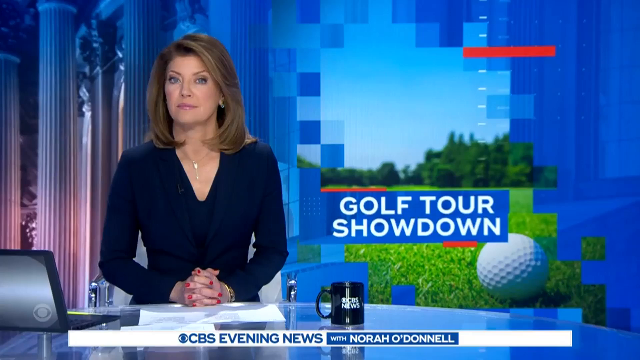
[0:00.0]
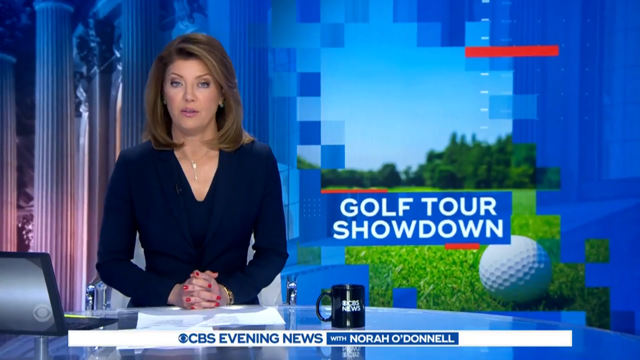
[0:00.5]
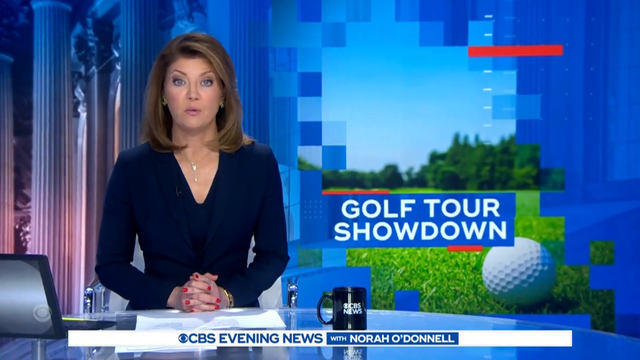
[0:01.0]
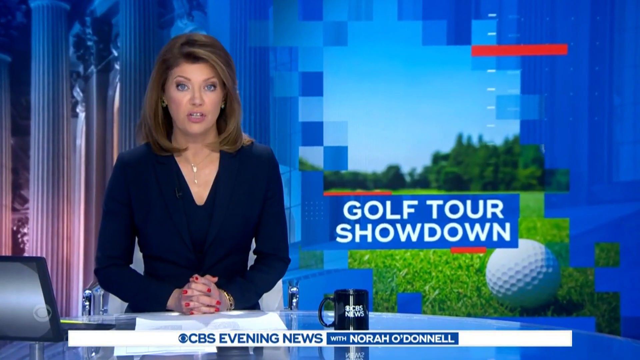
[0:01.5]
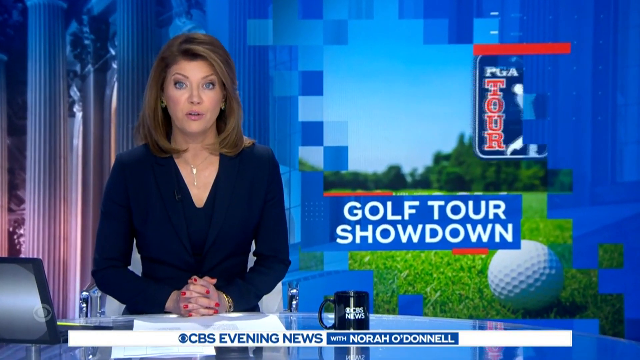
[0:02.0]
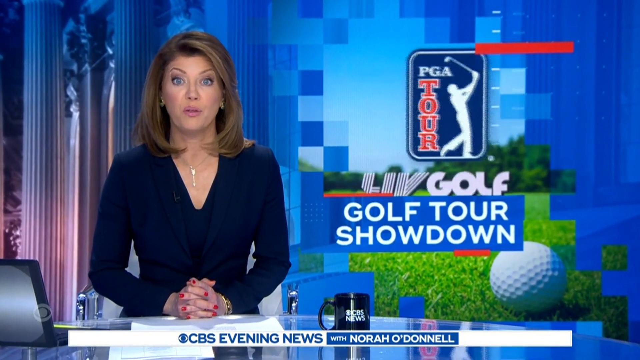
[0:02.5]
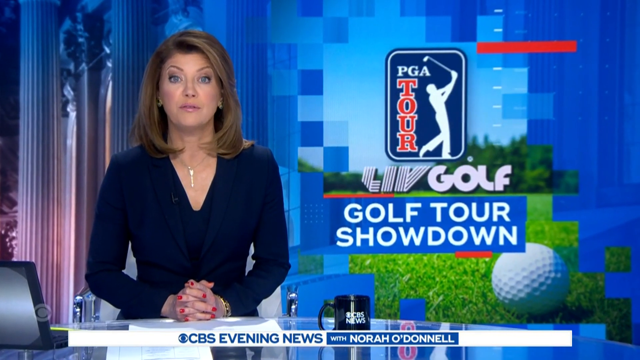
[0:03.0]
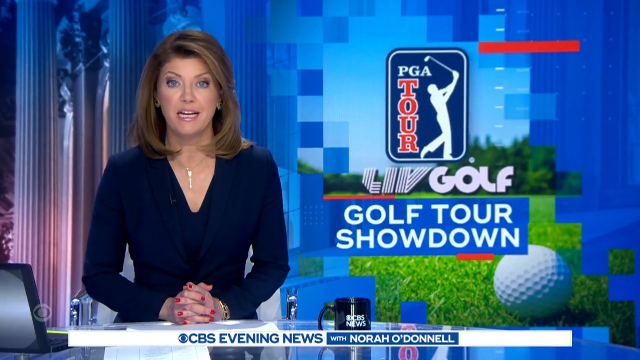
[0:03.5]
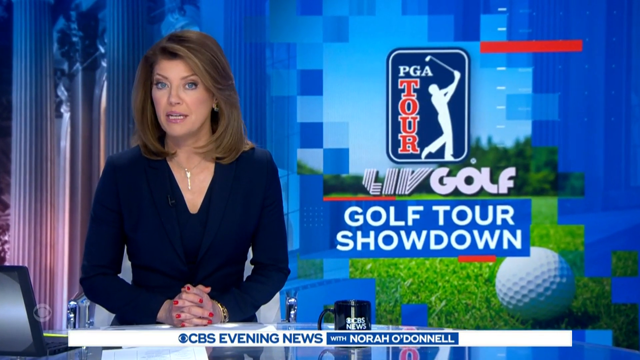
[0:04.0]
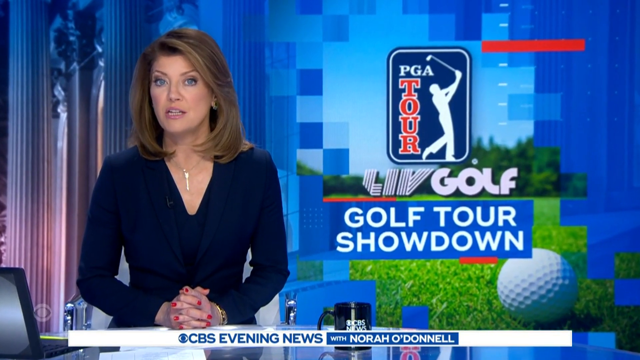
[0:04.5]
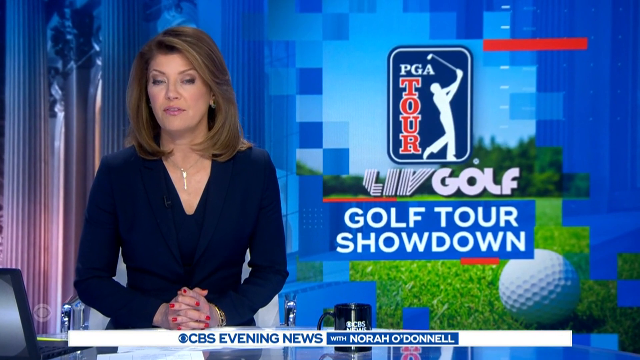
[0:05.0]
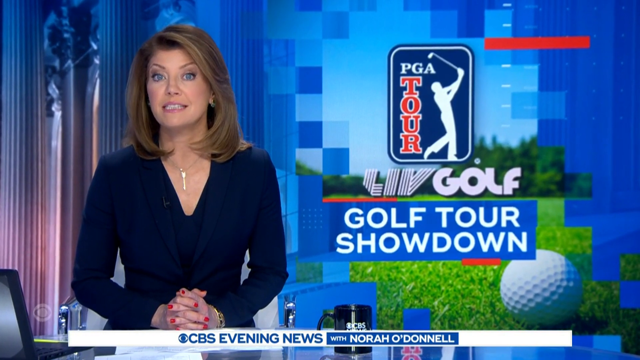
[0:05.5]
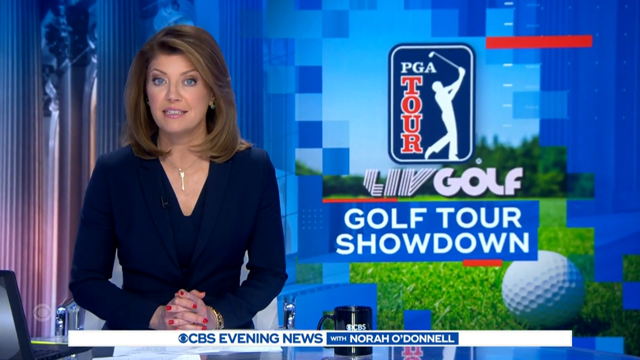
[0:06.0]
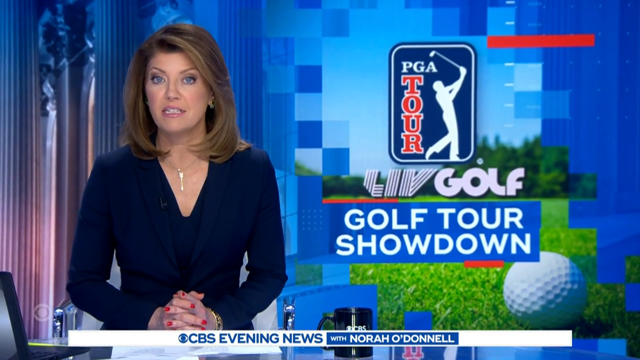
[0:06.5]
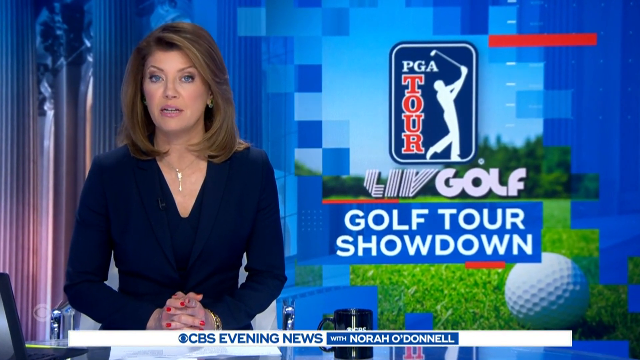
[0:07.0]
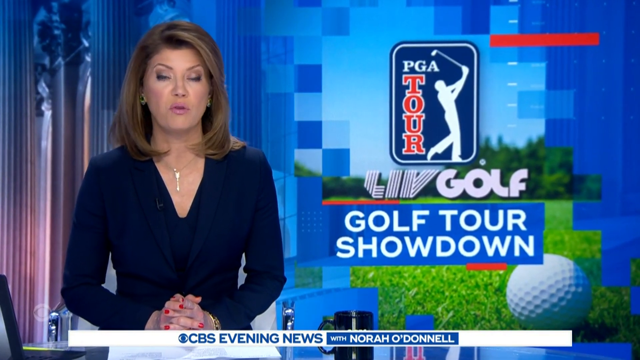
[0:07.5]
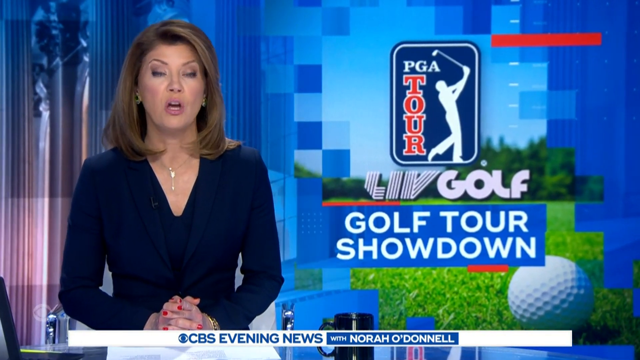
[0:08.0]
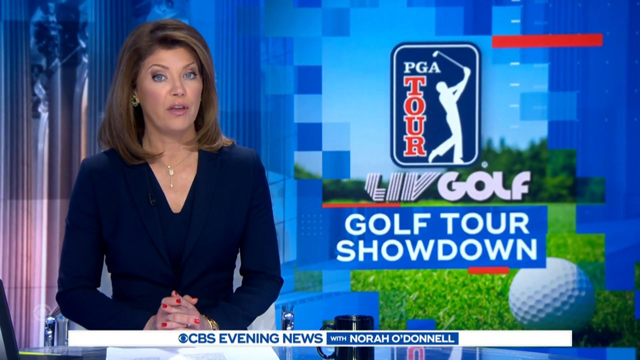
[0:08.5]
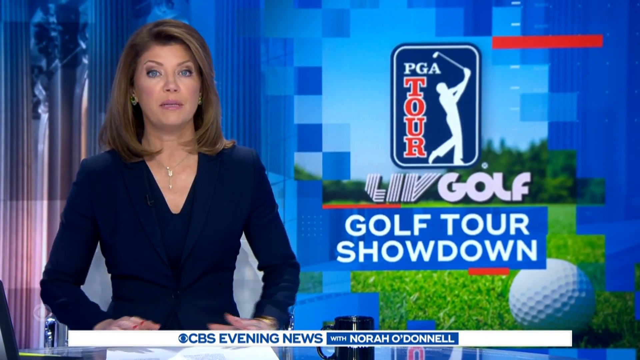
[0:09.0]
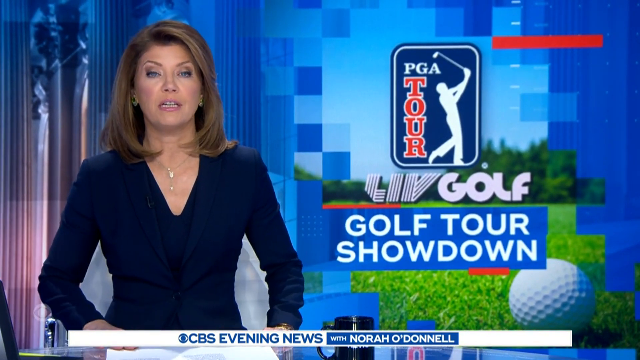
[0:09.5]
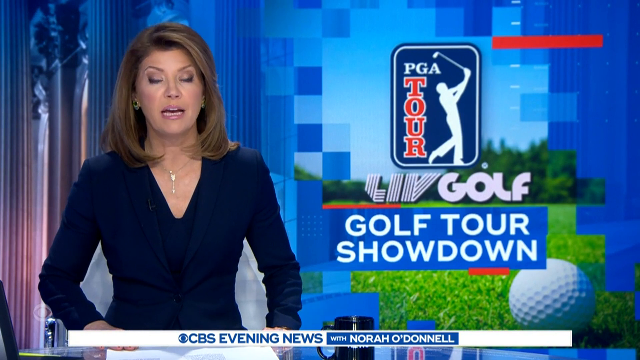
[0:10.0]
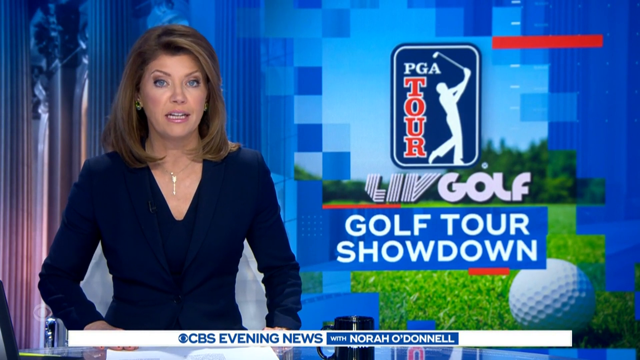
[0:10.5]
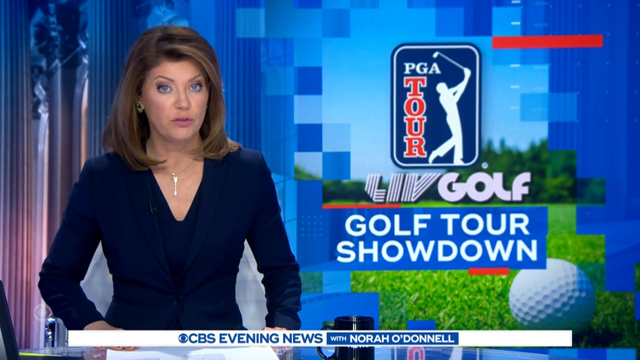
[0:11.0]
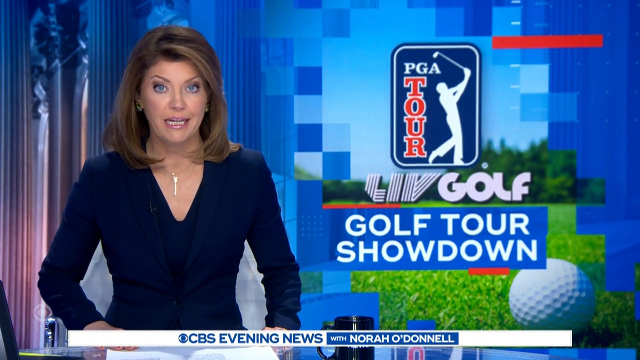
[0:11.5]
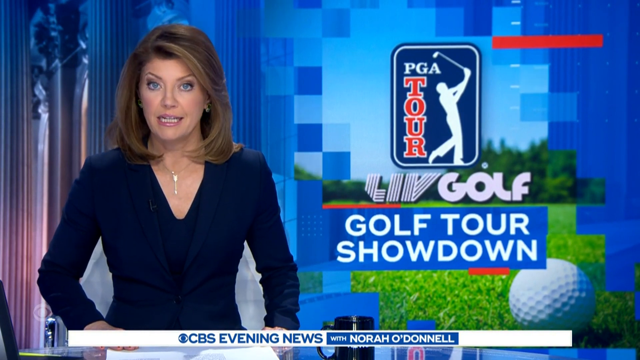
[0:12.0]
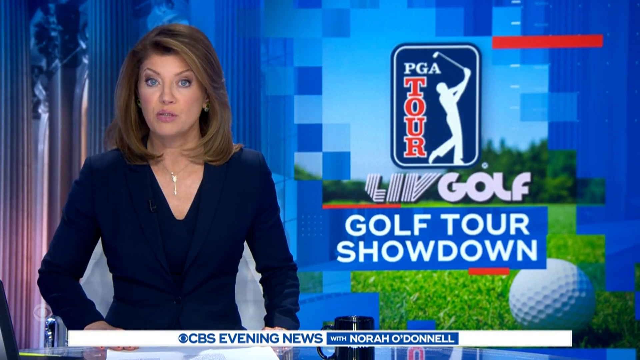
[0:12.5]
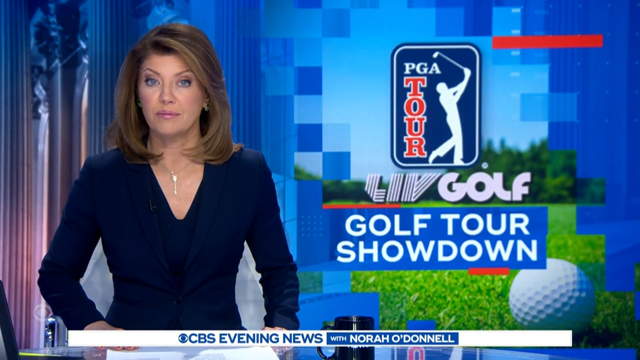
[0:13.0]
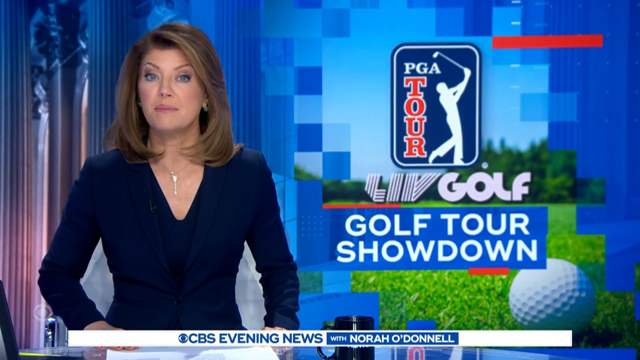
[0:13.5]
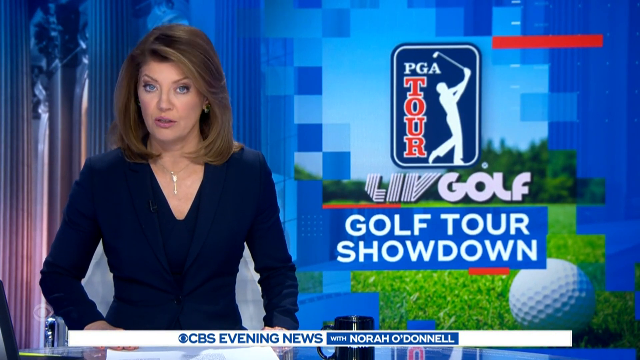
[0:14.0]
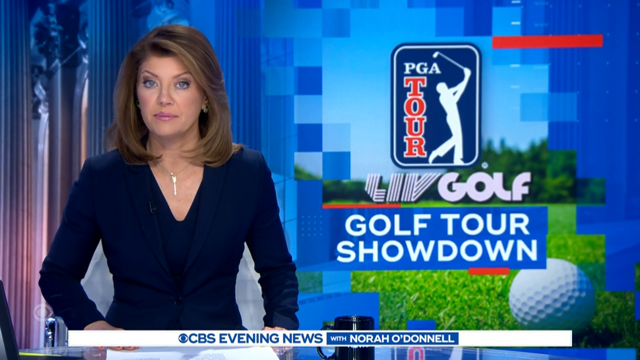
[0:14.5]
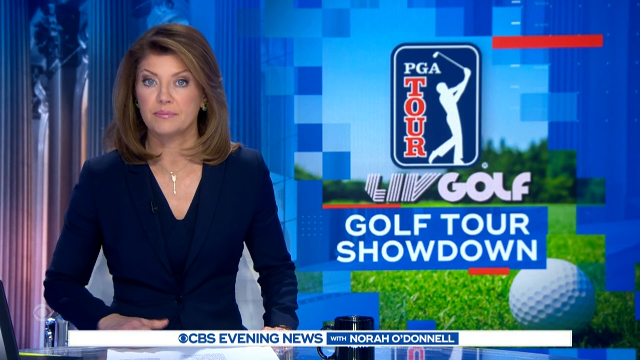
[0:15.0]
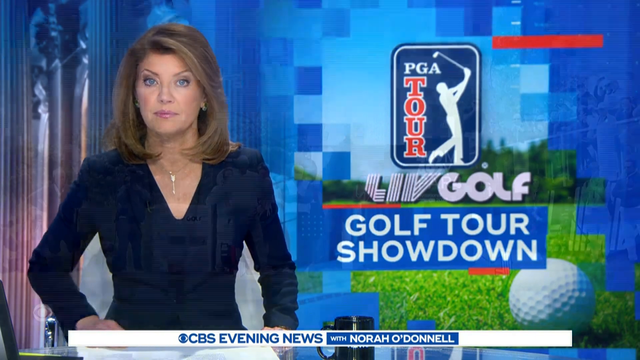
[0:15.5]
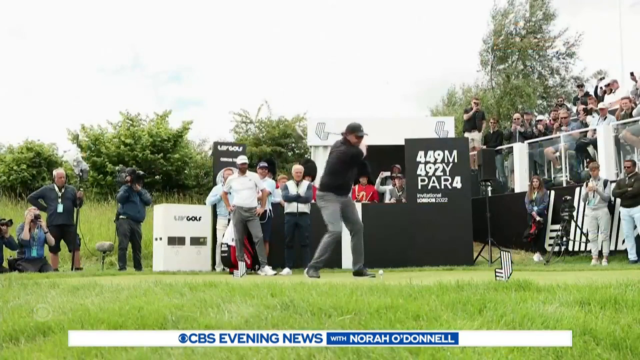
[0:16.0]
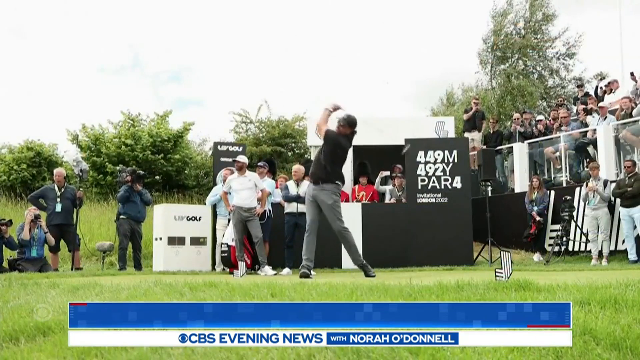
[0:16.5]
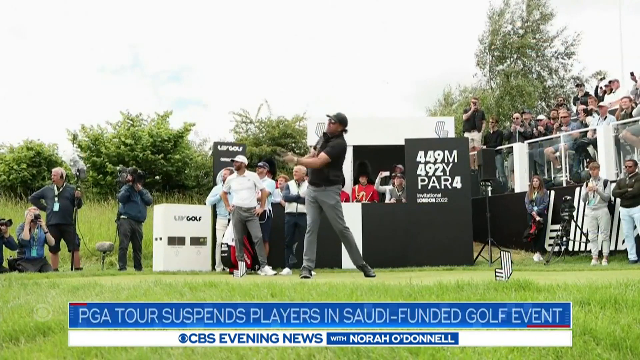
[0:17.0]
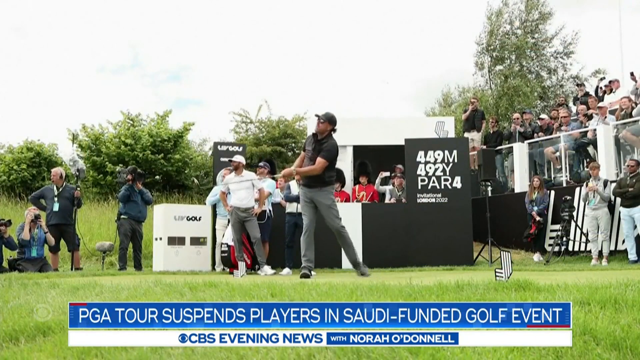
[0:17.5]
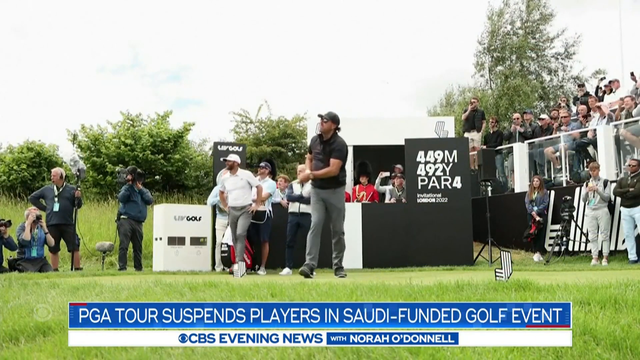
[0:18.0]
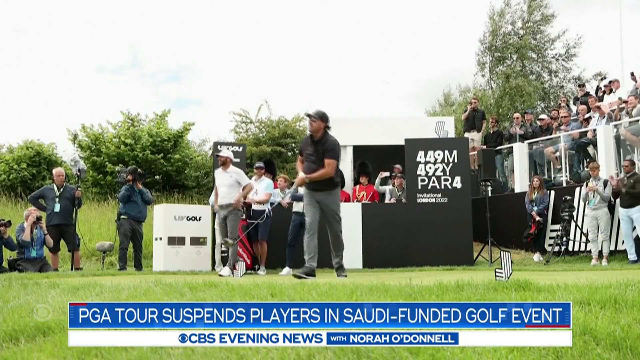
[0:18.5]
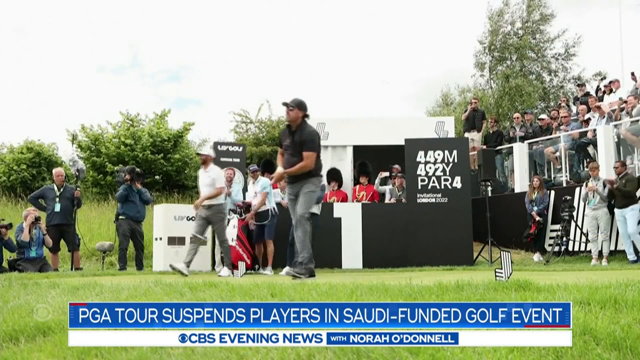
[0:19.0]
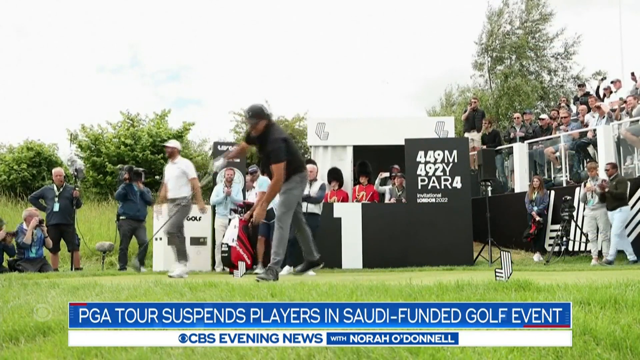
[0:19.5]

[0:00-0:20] A segment of CBS Evening News with Nora O'Donnell presents a story about a golf tour showdown. Nora O'Donnell is seated off to the left of the images in a newsroom with a generated background showing a building with column fronts. She has shoulder-length brown hair and blue eyes, and wears a long-sleeved black V-neck top and a silver necklace. The images are shown to her right; one of them is the PGA Tour golfing logo, a dark navy blue rectangle with a white outline containing the outline of a man holding a golf club up in the air mid-swing. "PGA" is written horizontally in white capital letters, and "TOUR" is written vertically in red capital letters outlined in white. Later, the story description appears across the bottom in a blue banner reading "PGA Tour suspends players in Saudi funded golf tournament", over a background video of someone golfing with an audience.